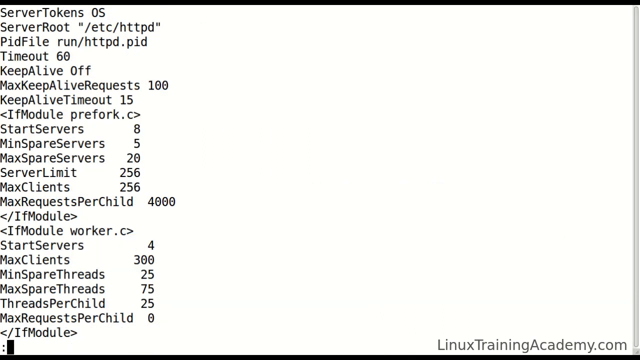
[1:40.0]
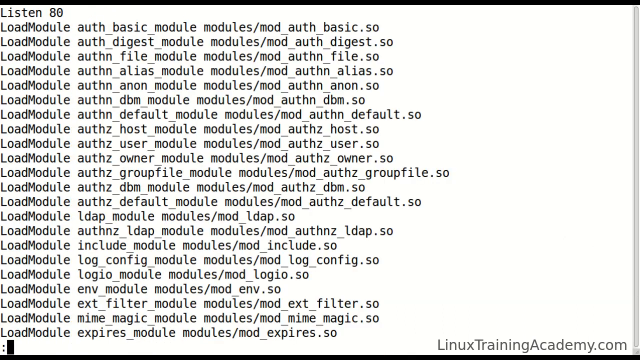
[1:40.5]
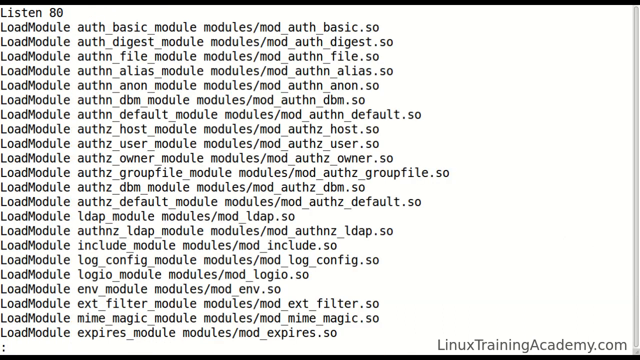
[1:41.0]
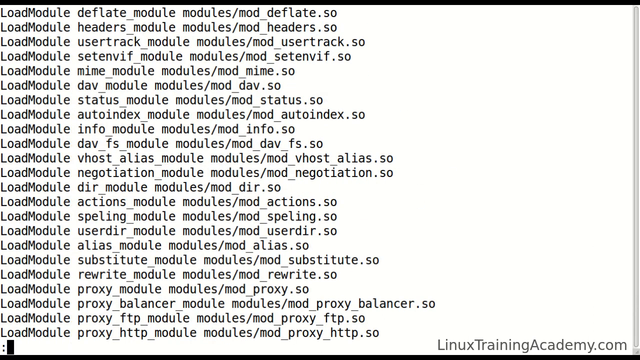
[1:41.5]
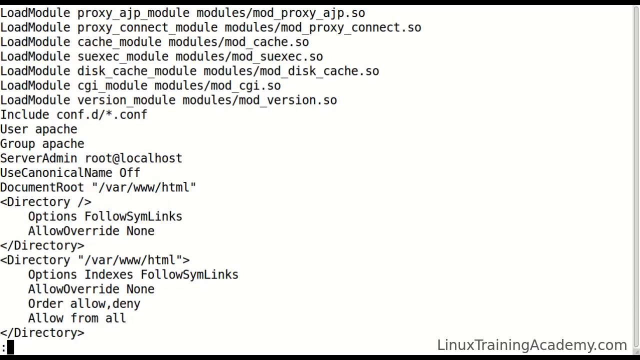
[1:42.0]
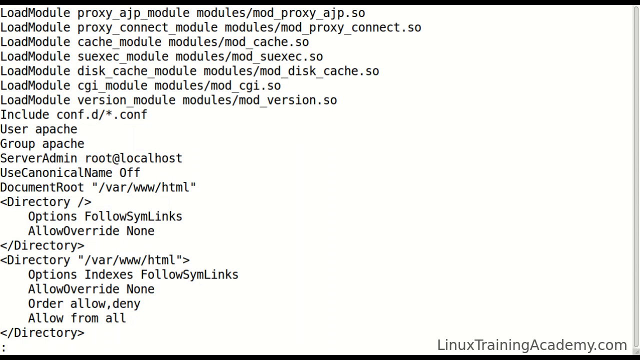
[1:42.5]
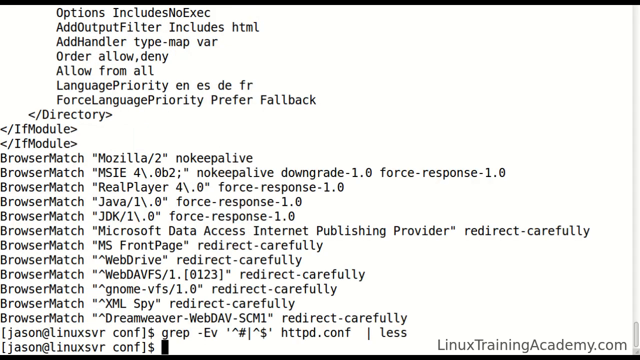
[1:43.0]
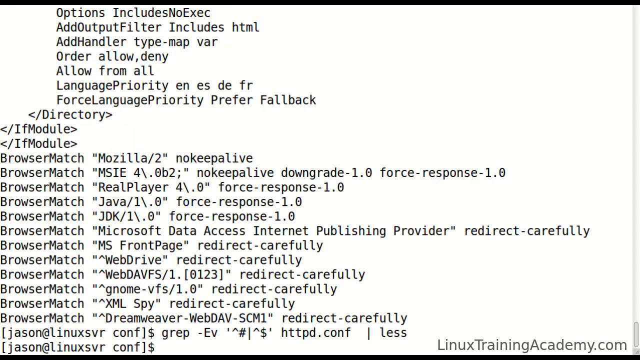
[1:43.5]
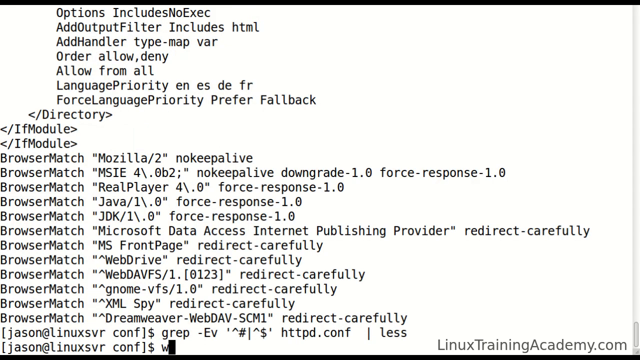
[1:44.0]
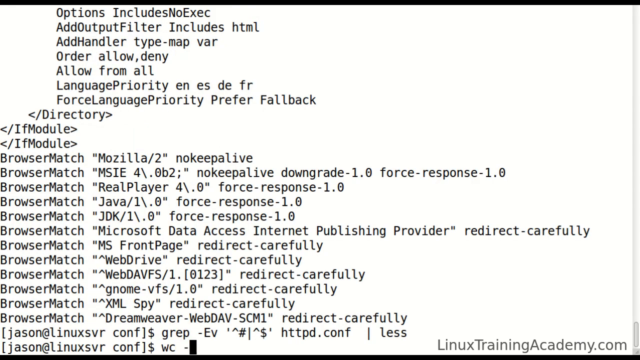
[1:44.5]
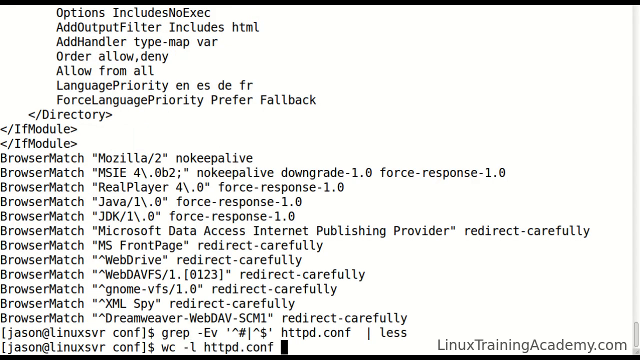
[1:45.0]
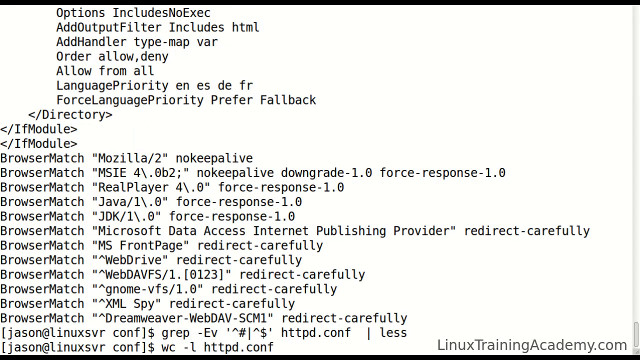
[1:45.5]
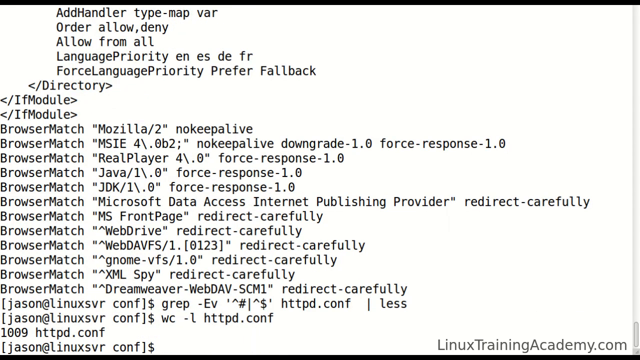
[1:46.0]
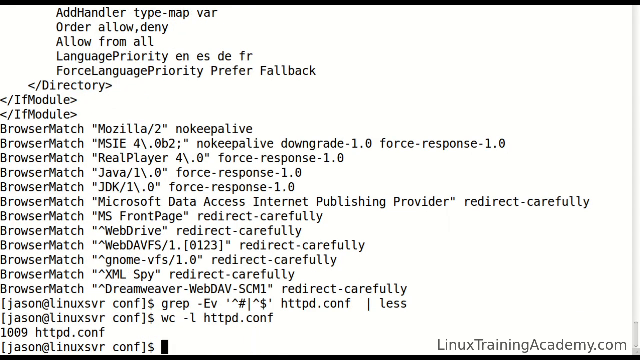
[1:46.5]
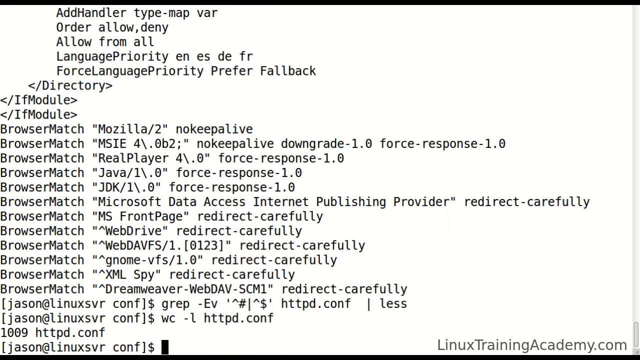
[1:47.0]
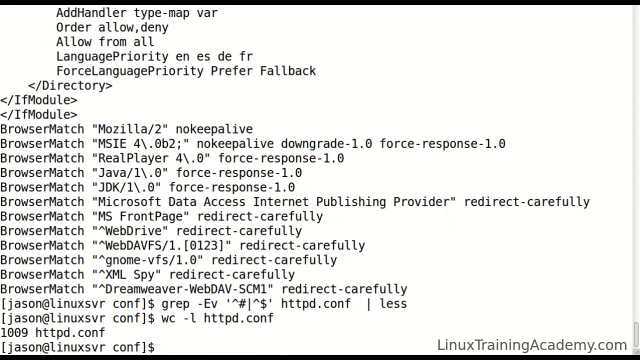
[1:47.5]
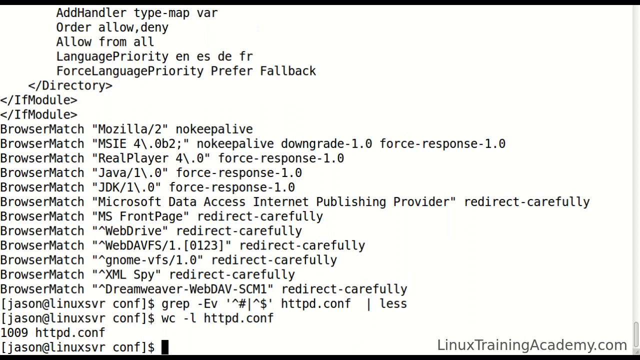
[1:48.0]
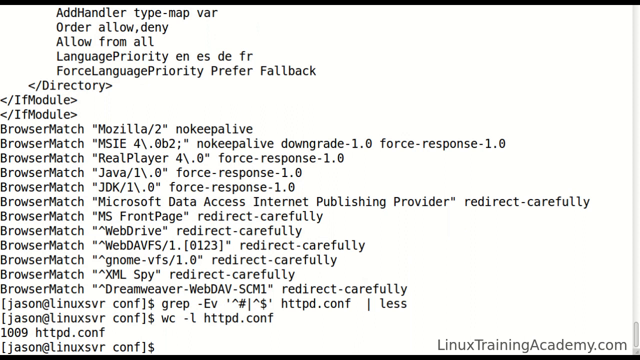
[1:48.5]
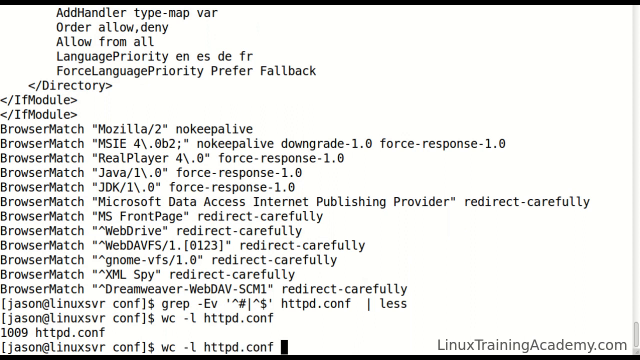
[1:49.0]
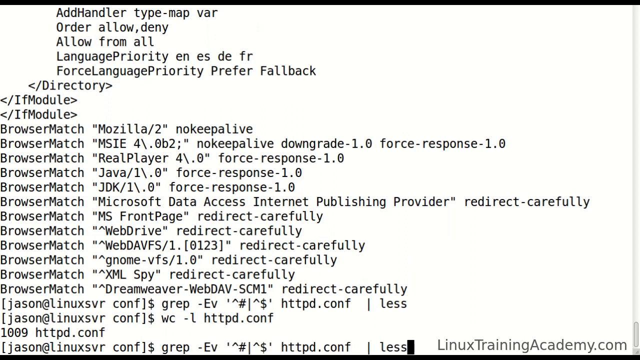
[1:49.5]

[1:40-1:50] A screen recording from a computer screen shows a notepad-style program with multiple lines of black text, and a watermark in the bottom right-hand corner says "LinuxTrainingAcademy.com". The text looks like information rather than code, including a list of load module lines with different file paths ending in .so. The screen keeps changing in quick succession, showing different screens with different text, all showing pathways and directories, moving too fast to take in all of the information.